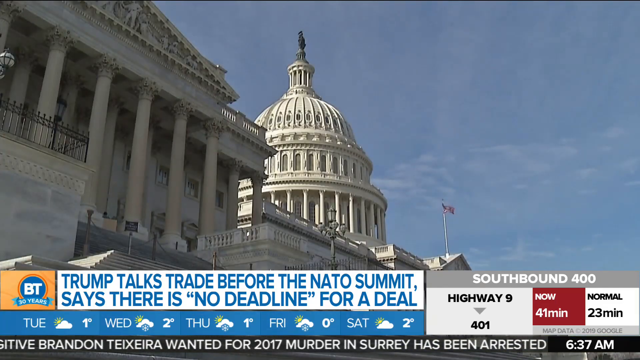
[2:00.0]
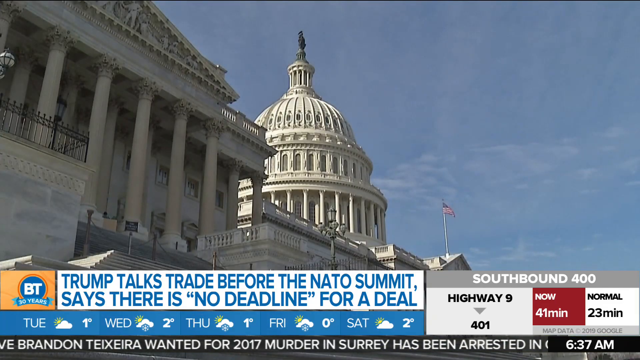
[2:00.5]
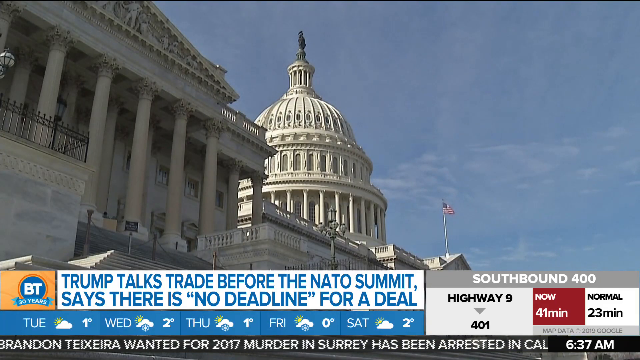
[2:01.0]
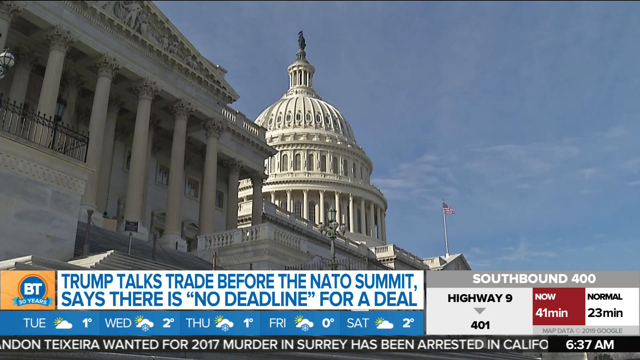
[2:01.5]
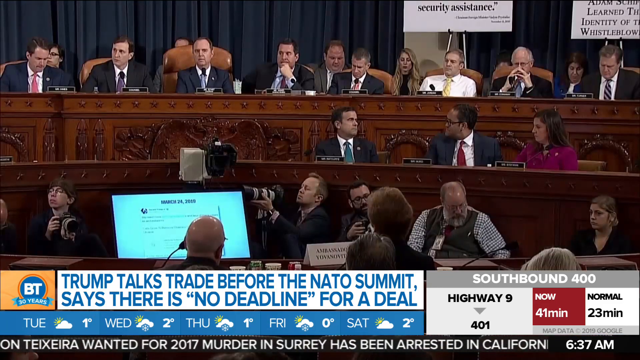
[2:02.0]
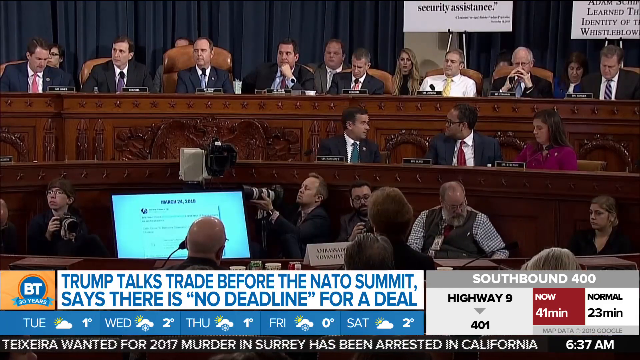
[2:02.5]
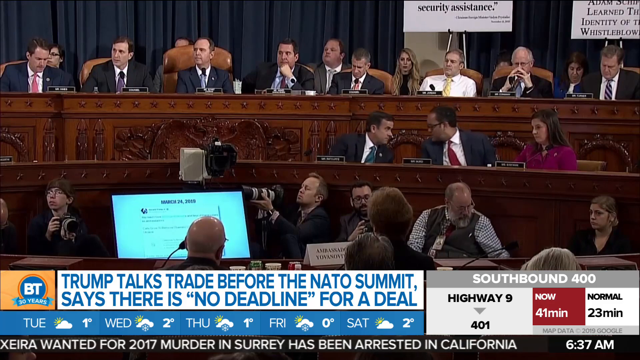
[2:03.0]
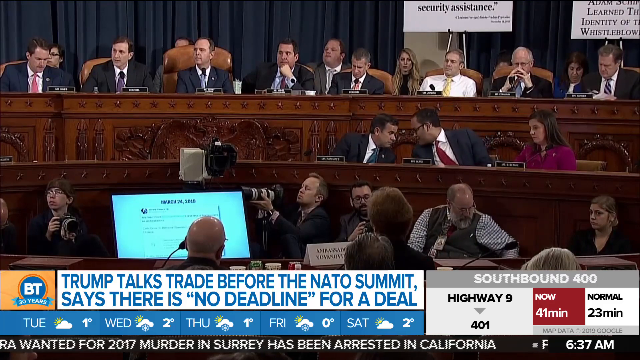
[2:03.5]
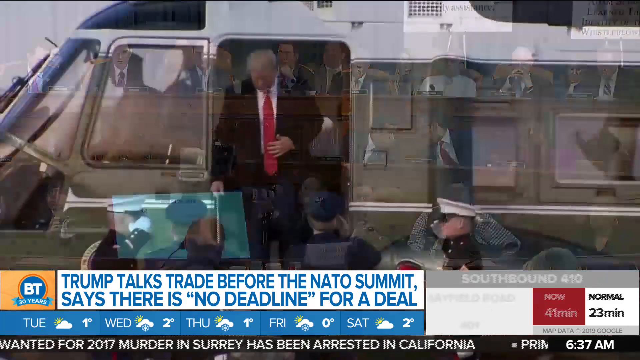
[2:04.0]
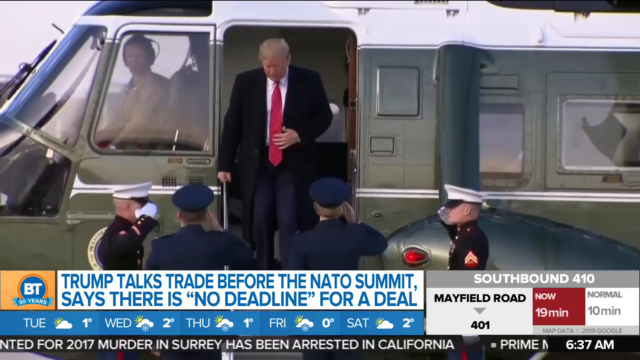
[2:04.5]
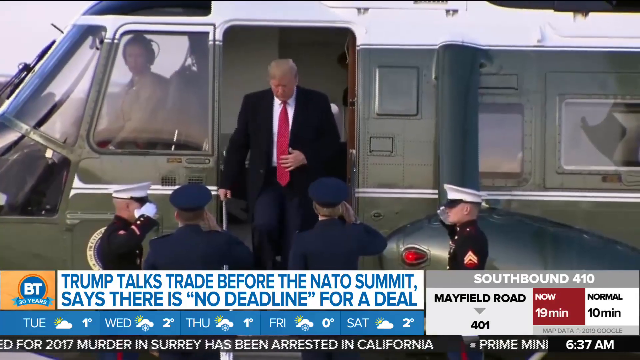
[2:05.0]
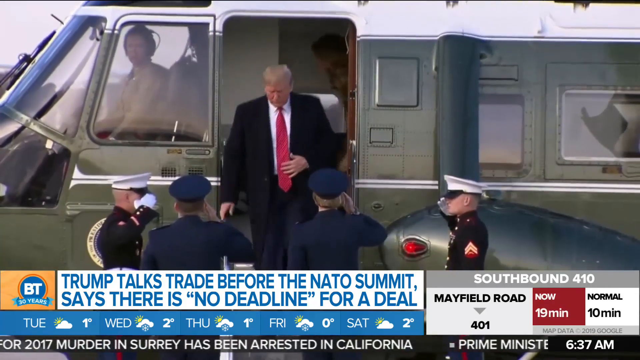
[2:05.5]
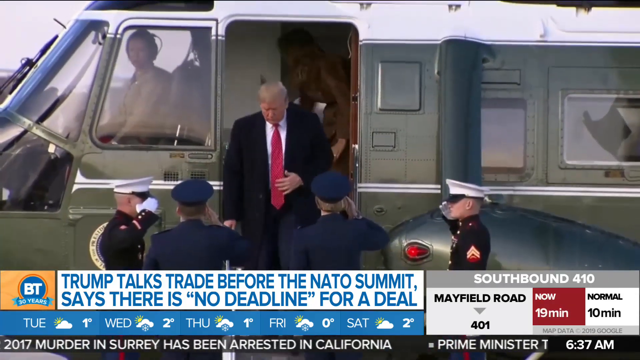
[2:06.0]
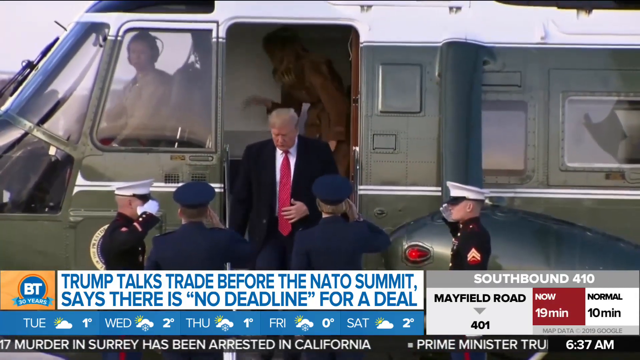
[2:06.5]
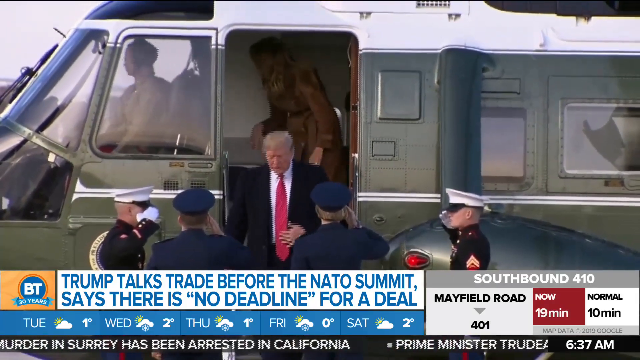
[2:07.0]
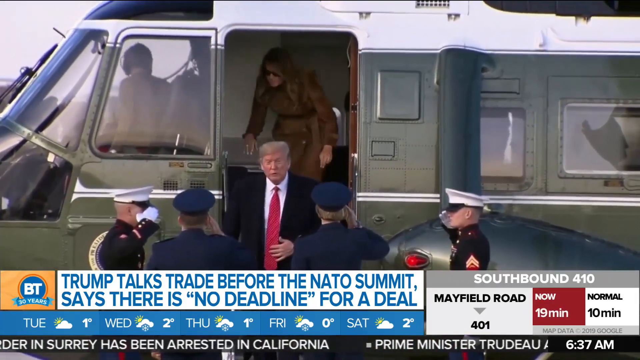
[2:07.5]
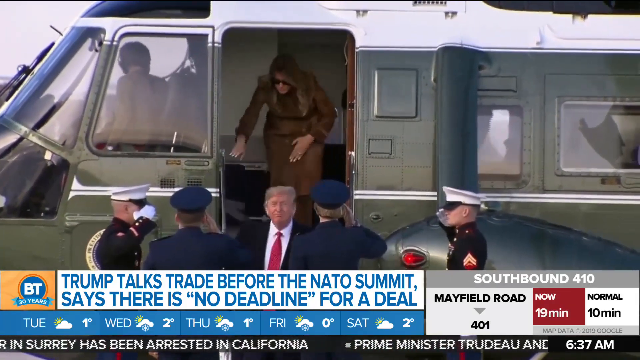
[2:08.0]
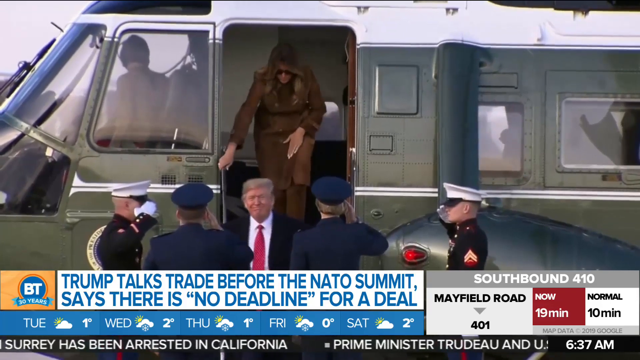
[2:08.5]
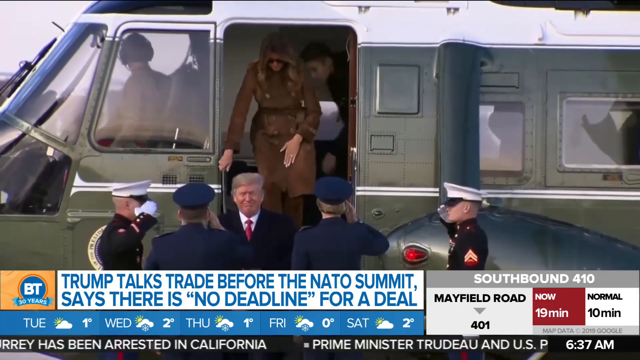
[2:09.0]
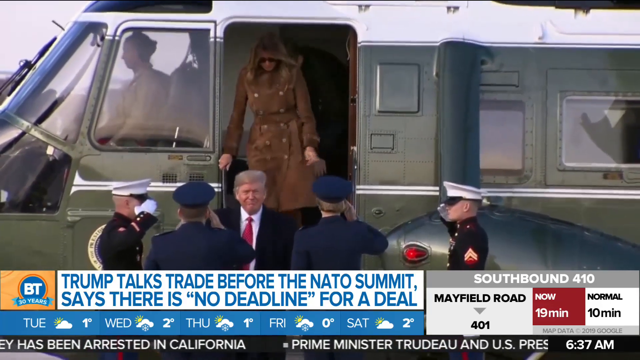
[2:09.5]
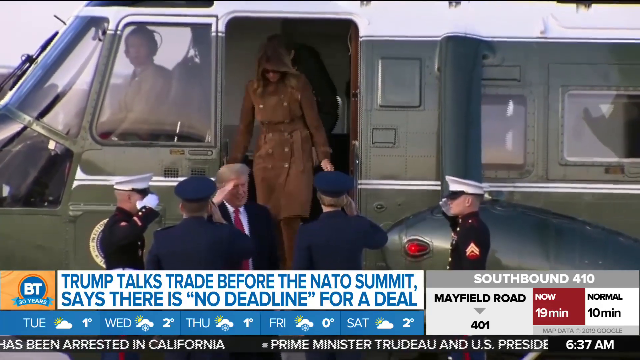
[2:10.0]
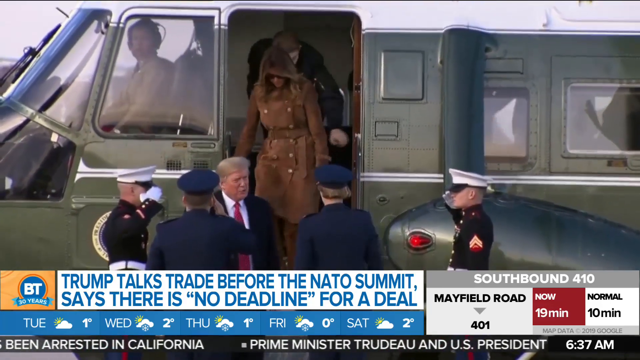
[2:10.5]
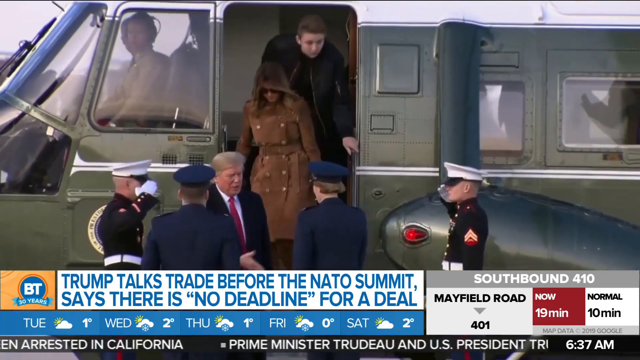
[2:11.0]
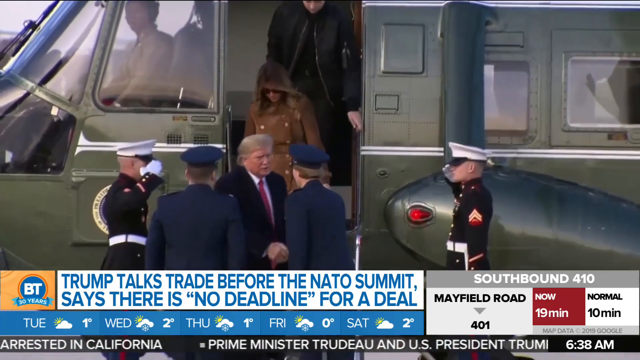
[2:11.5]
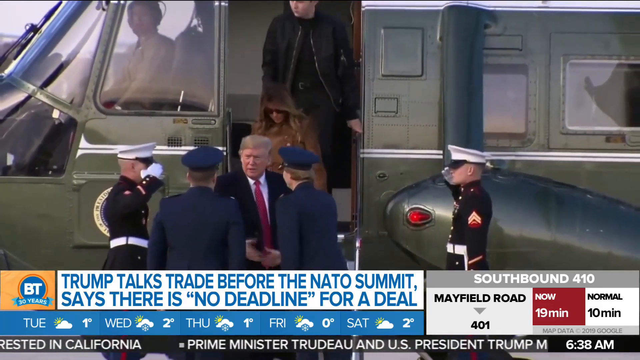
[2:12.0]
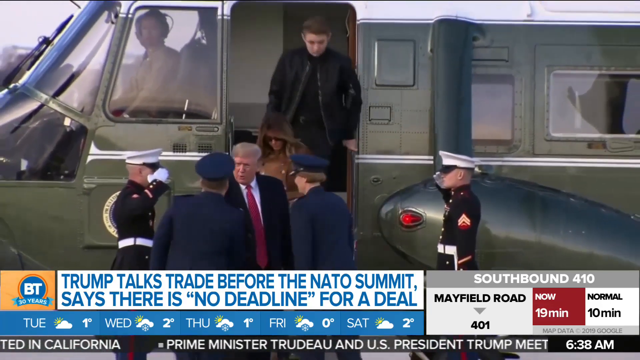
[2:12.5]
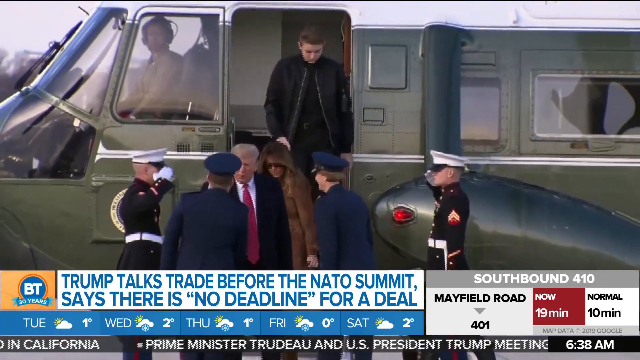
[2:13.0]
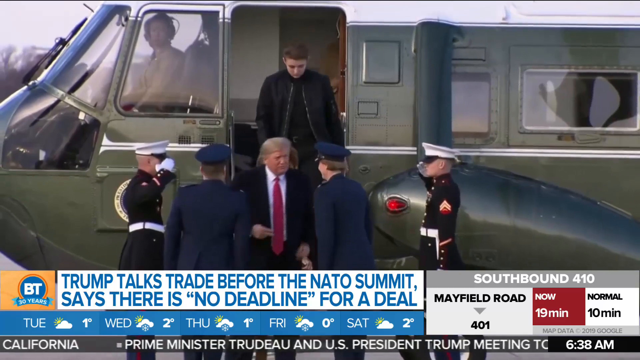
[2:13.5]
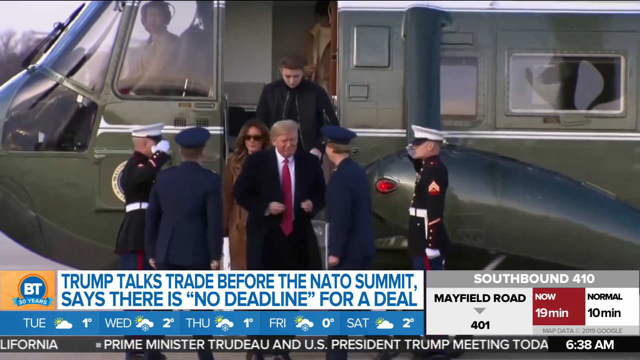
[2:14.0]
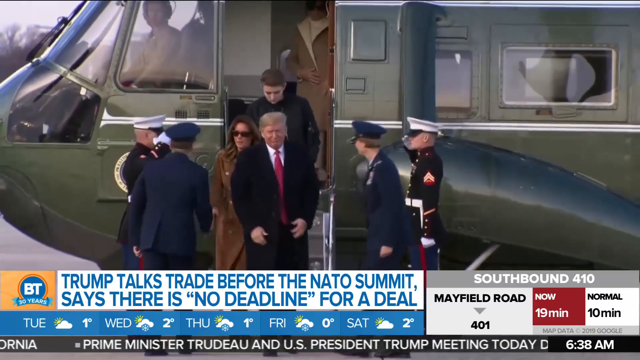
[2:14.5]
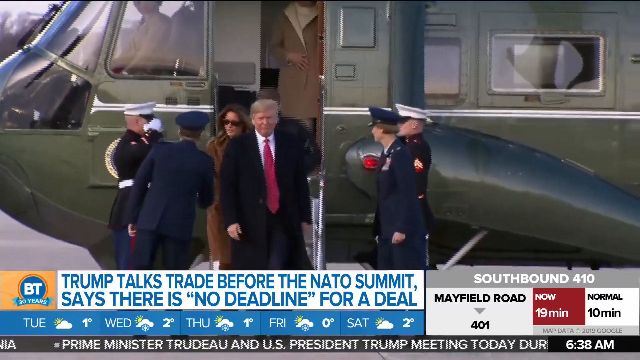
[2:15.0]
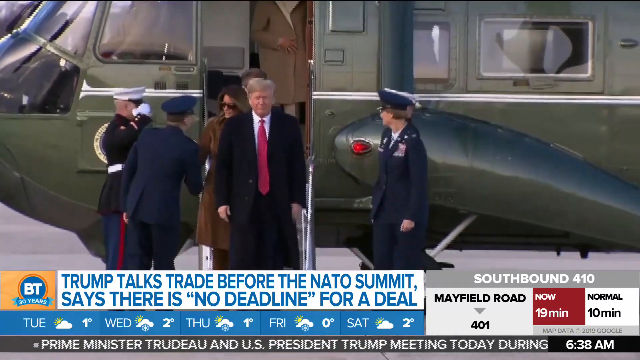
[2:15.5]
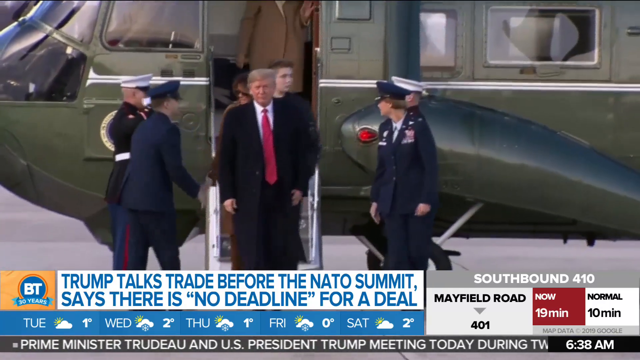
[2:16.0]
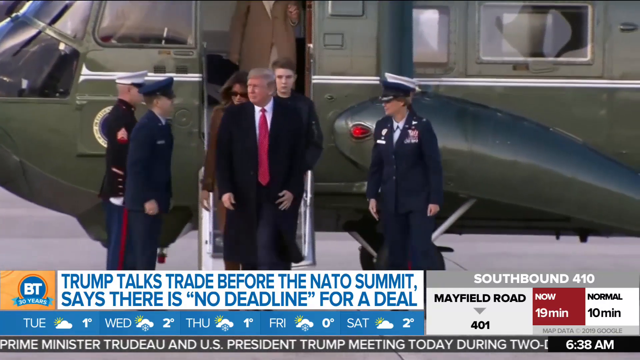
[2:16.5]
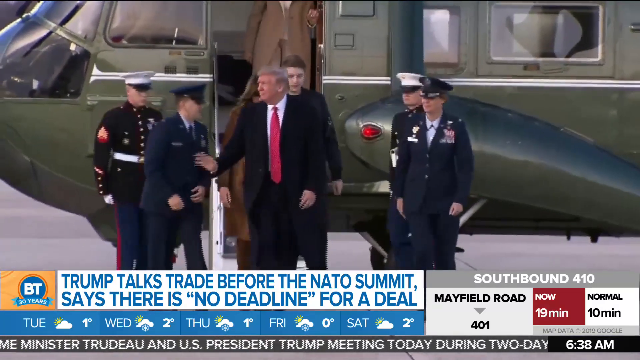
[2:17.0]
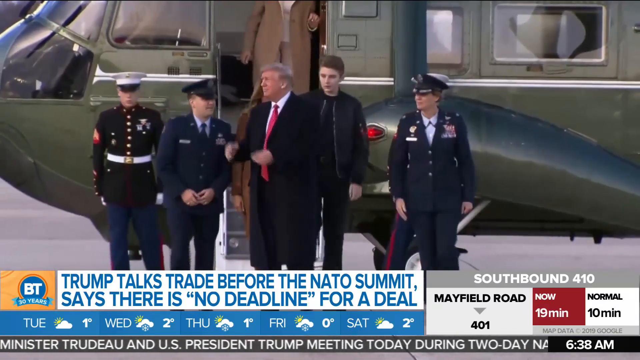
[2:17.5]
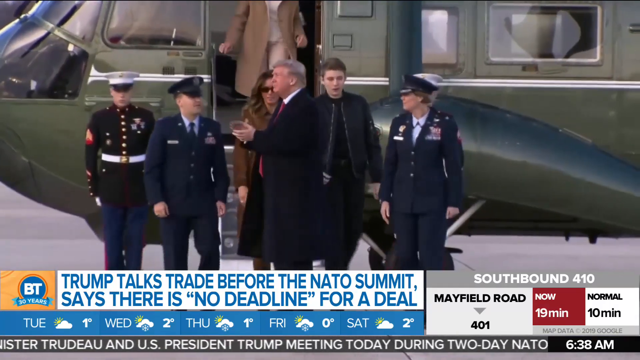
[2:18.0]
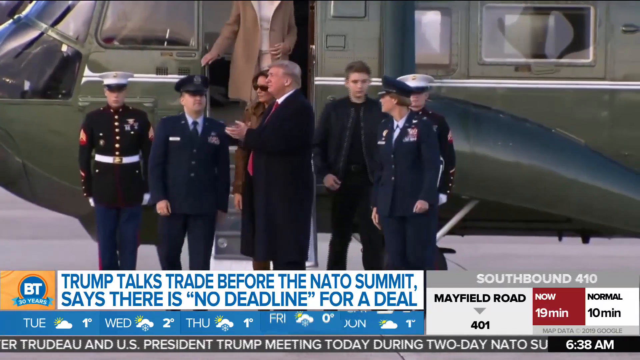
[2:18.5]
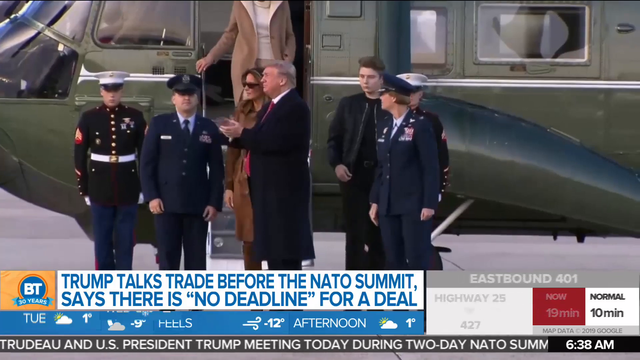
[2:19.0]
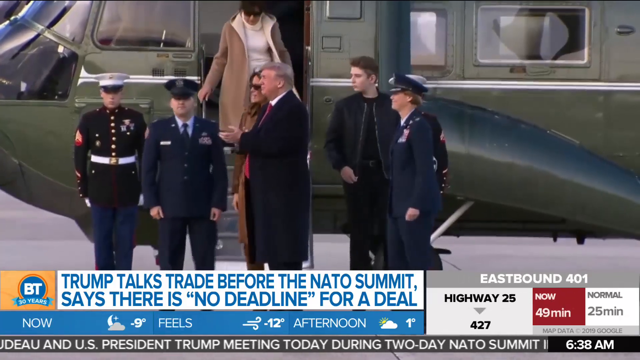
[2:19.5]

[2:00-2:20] A BT News segment about trade talks shows a white rectangle at the bottom of the screen reading "Trump talks trade before the NATO summit, says there is no deadline for a deal." To the left of this box, the BT News symbol is in a blue circle with a red outline, with the banner "30 years" at the bottom. Weather information for Tuesday to Saturday is at the bottom of the screen, and on the right a white and gray box shows traffic information for southbound 400. Taking up most of the screen above, a video shows the U.S. Capitol from below, looking up. It then shows Congress in session: two rows of Congress members sit behind long brown desks, below the Senators is a row of photographers with cameras, and at the bottom left is a large flat screen TV with text on it. The Congress members talk to each other. Next, President Trump walks out of a green and white helicopter, wearing a black suit, red tie, and white shirt, with his left hand in front of him on his stomach, as four military servicemen salute him. Behind him, his wife walks out of the helicopter in a long brown dress with two columns of buttons down the center. As Trump reaches the bottom of the steps, he salutes the military men with his right hand. The whole family walks between two rows of servicemen, and Trump looks to his right, claps, and waves with his right hand.